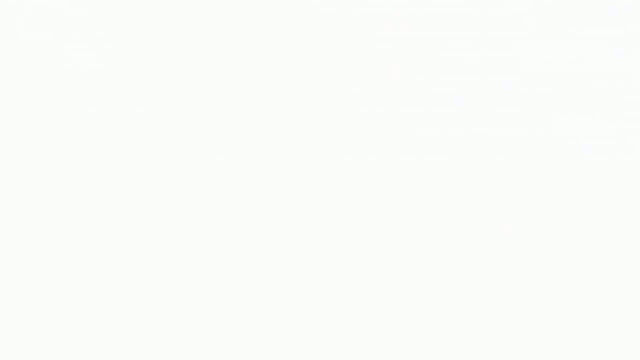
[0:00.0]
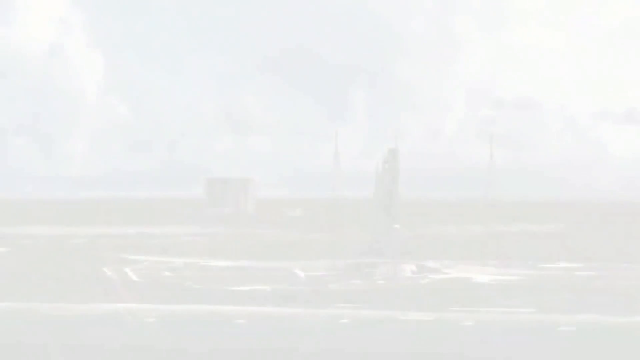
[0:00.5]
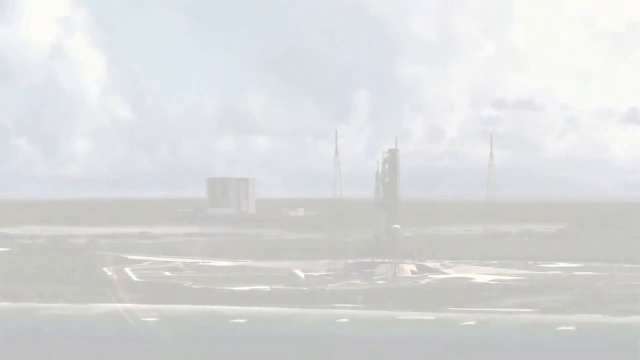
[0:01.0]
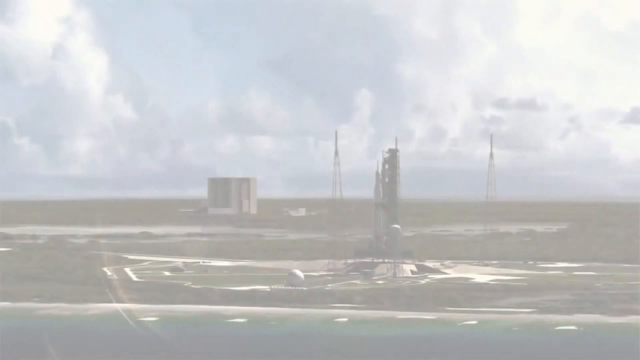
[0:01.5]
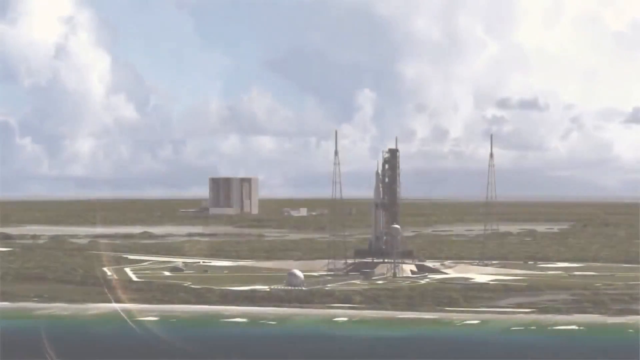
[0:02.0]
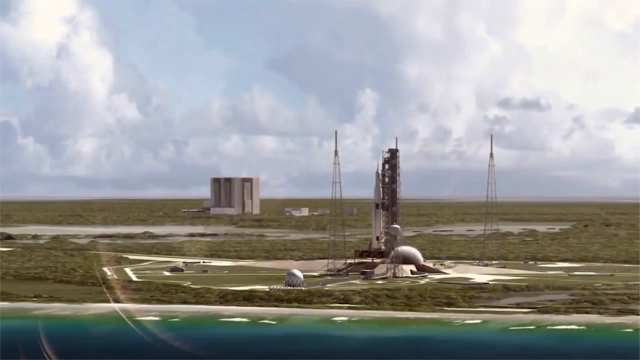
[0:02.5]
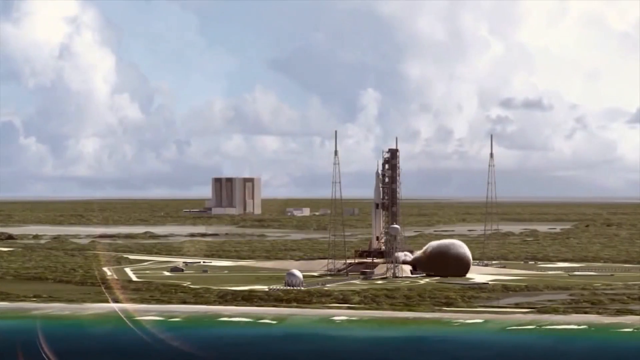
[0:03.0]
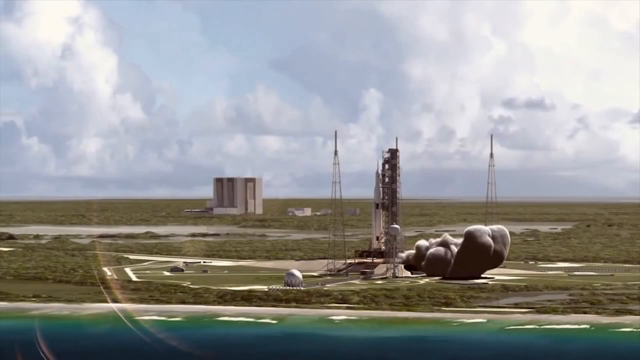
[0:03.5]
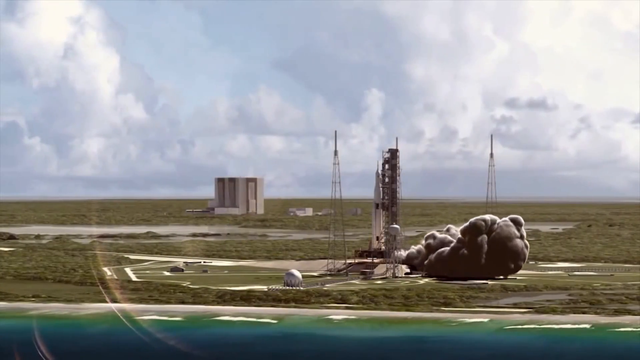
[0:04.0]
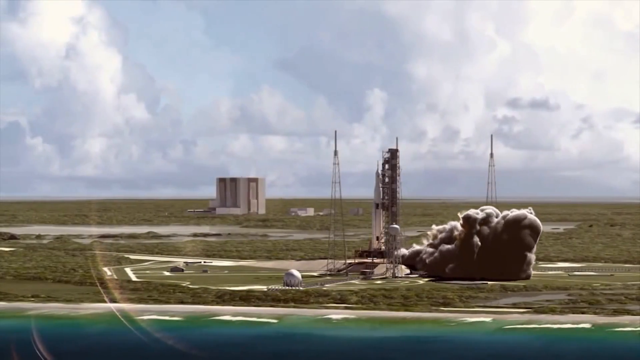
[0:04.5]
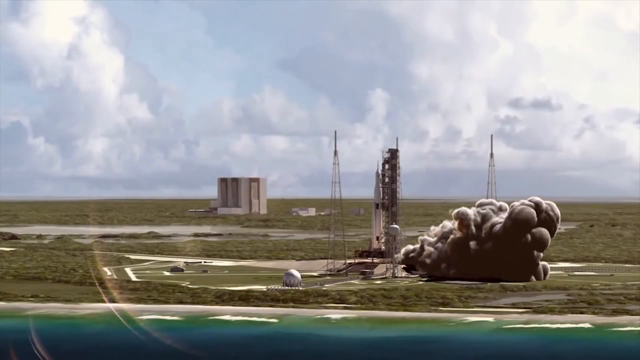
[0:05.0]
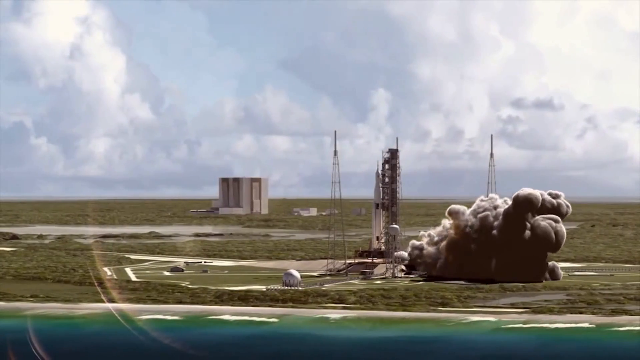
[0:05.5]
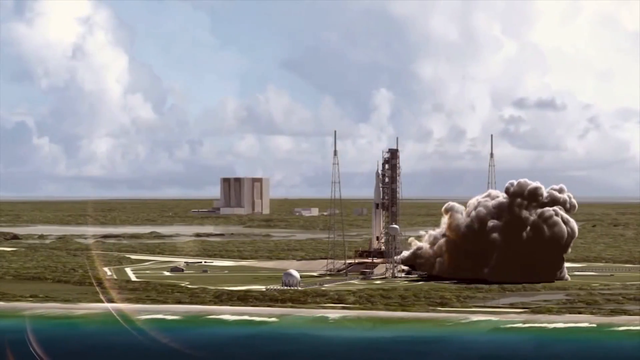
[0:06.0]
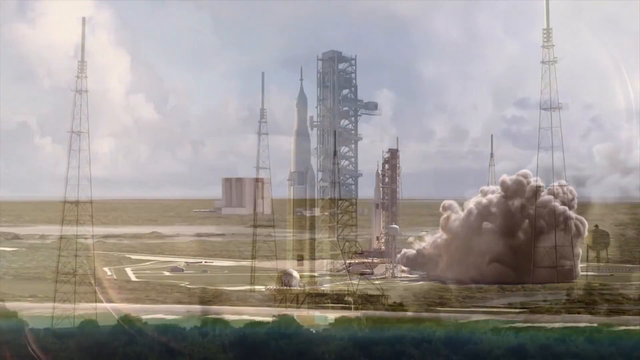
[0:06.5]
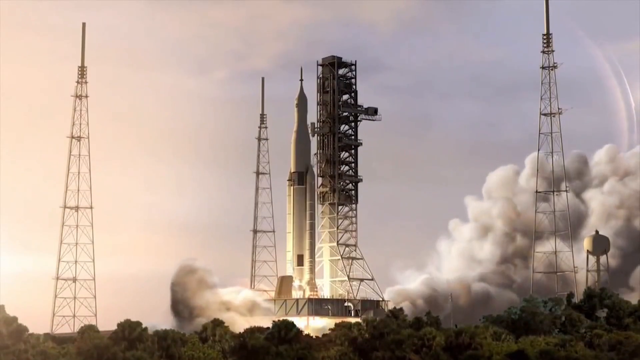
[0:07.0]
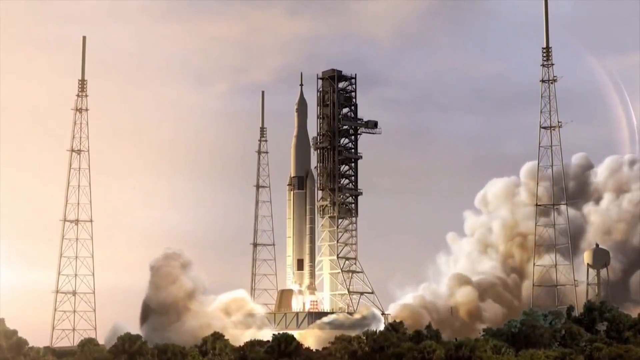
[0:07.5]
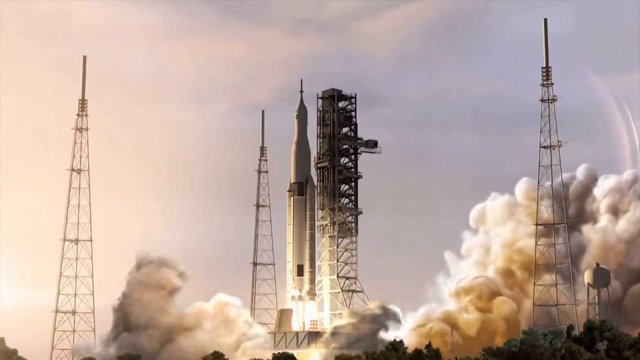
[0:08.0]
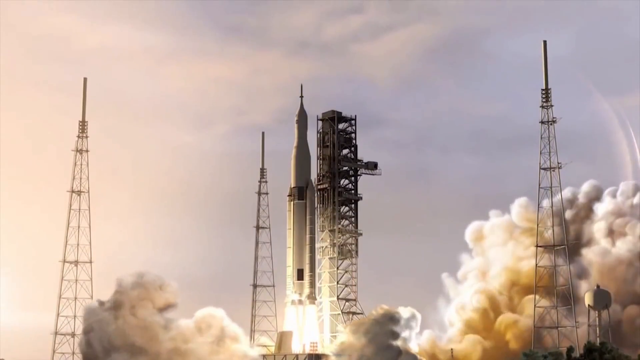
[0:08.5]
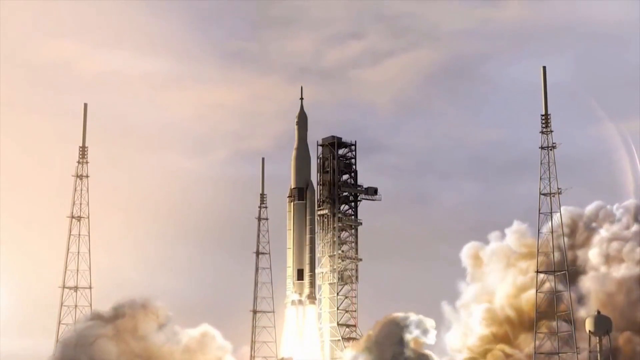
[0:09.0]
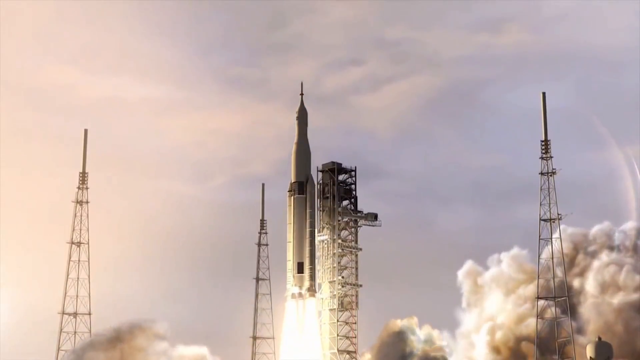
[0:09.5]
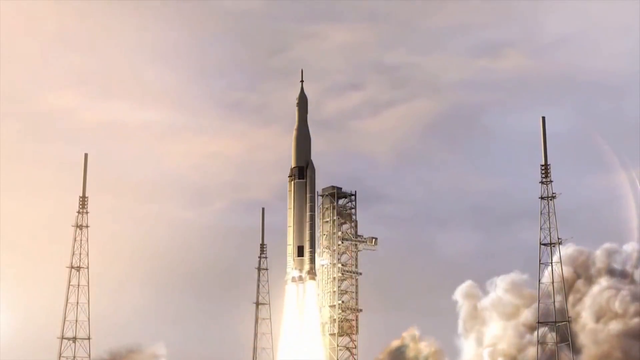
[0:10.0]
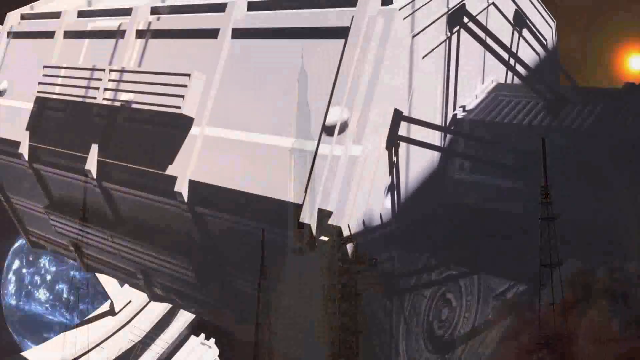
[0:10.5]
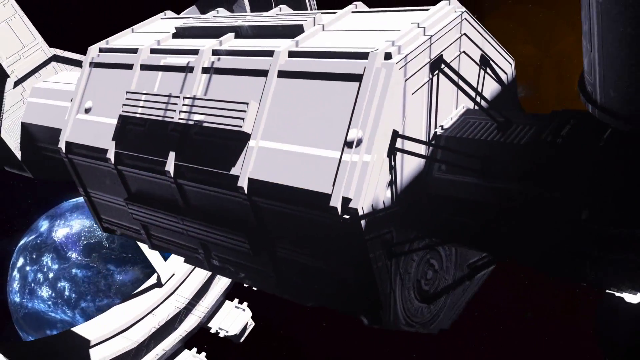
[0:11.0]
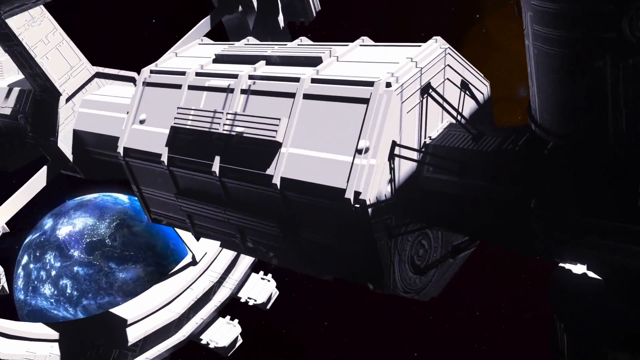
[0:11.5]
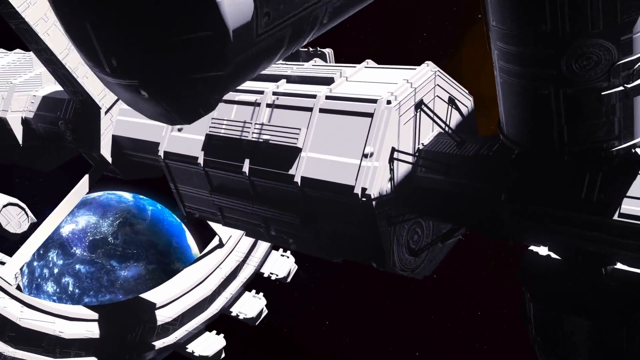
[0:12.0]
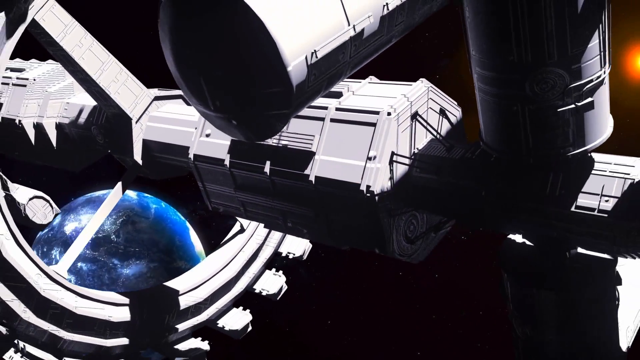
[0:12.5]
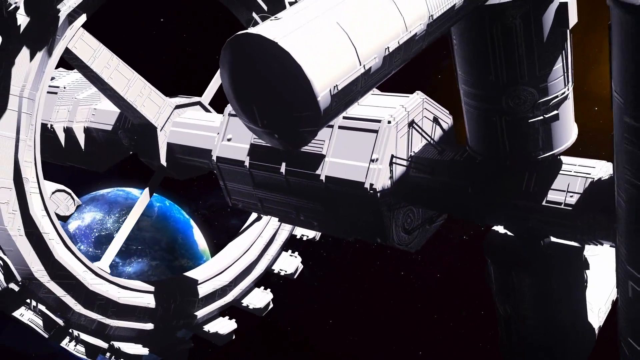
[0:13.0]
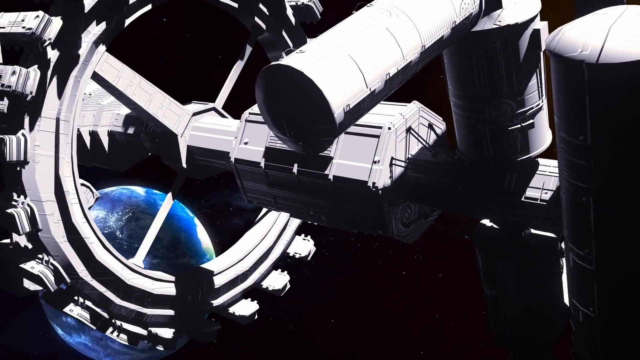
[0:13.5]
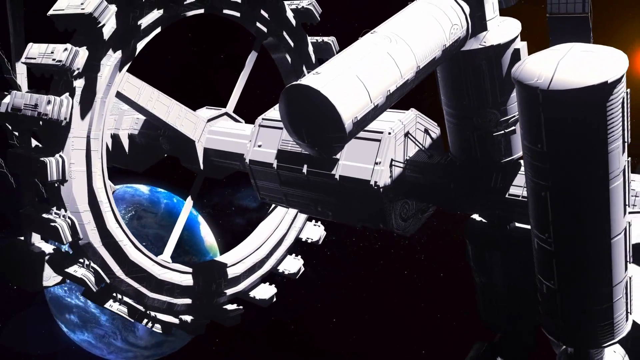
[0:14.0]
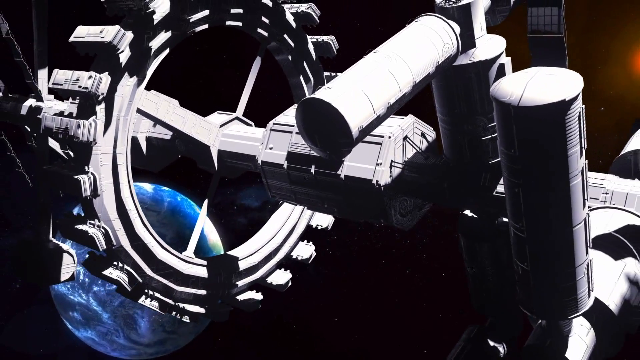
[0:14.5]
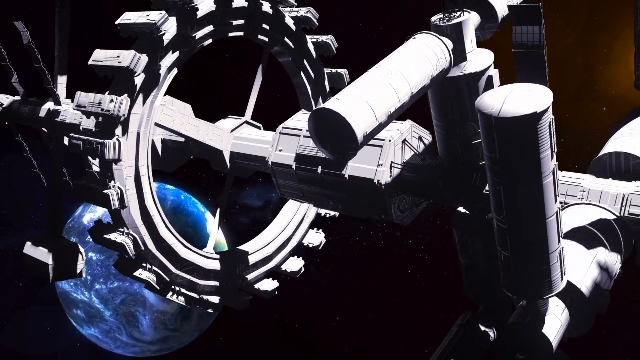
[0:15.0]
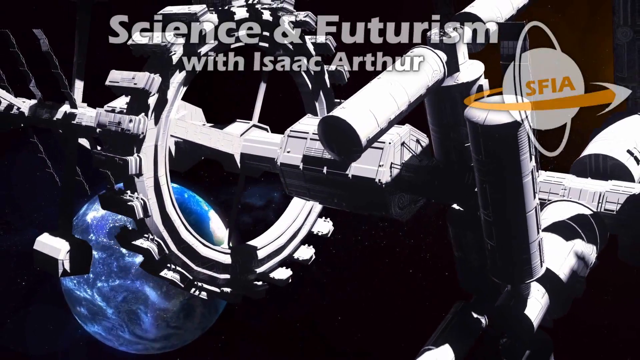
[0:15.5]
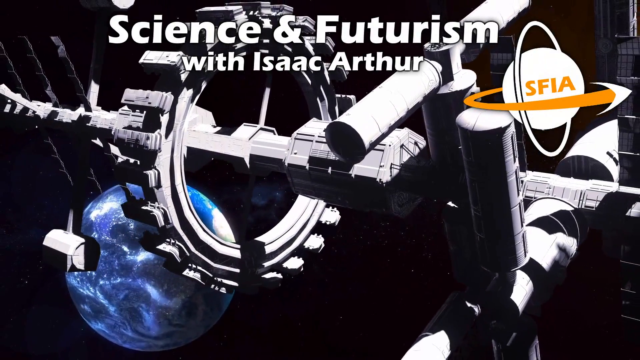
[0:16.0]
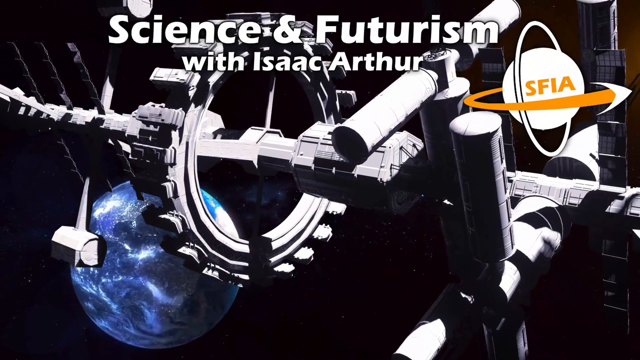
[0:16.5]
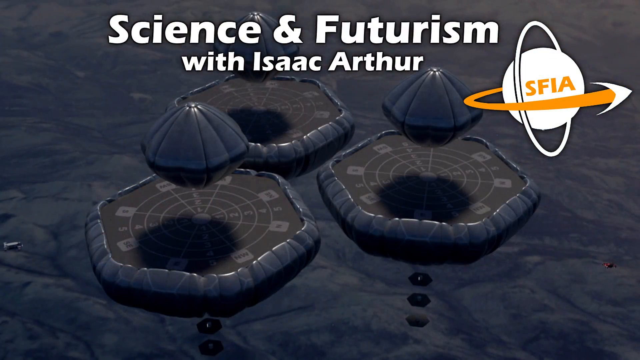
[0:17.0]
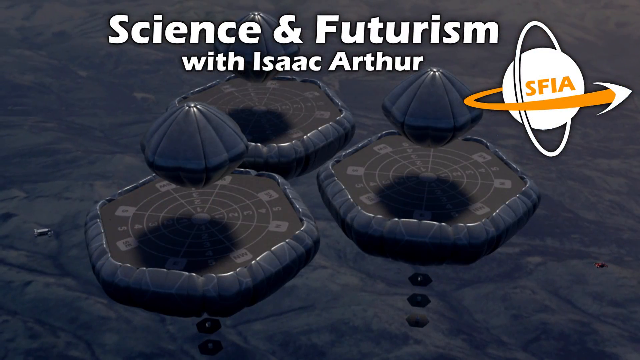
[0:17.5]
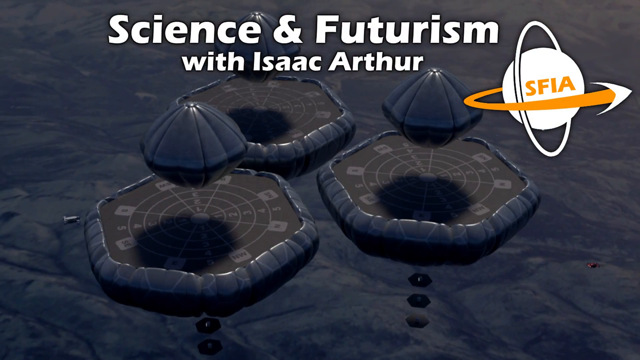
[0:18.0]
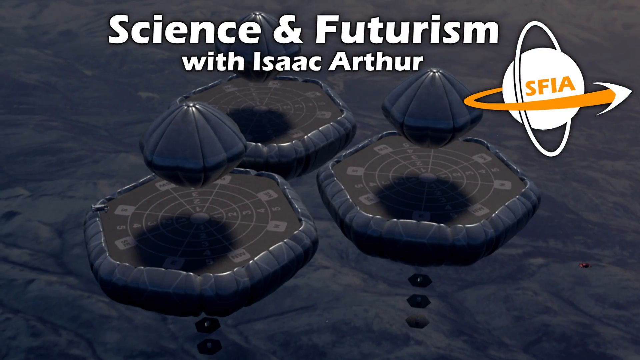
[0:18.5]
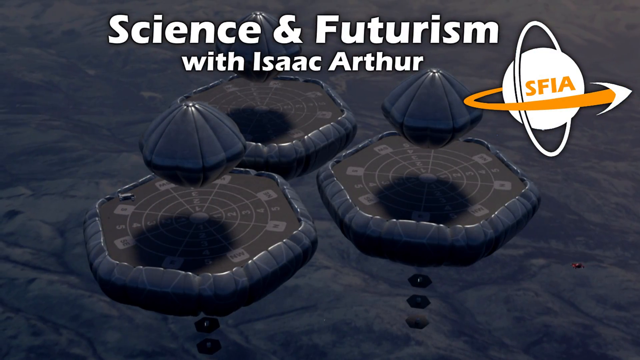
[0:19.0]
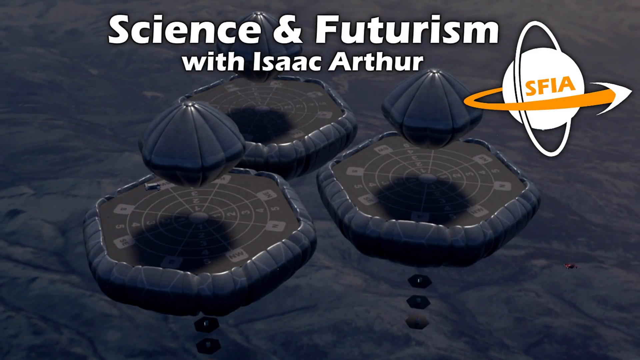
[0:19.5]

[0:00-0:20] A rocket begins to launch off a pad. The surface is flat, it is daytime, and the skies are cloudy. There is a single multi-story building in the back. A plume of smoke barrels from beneath the rocket. A closer view follows, showing the same plume of smoke rolling away from beneath the rocket as it takes off and starts to leave Earth. The scene then moves to immediate outer space, where what is apparently the International Space Station moves through space, with Earth visible a bit in the distance. Next come objects that look like trampolines, still in space: three pads with three orbs hovering above them in immediate outer space. Earth's atmosphere and clouds are visible beneath them.